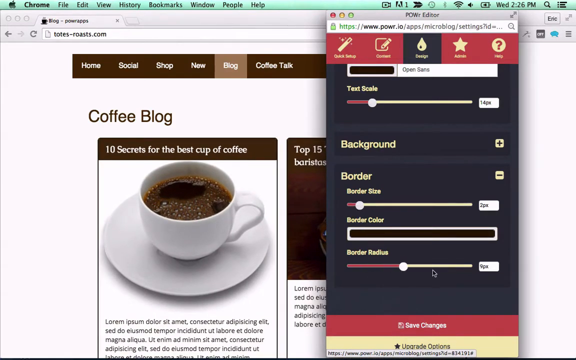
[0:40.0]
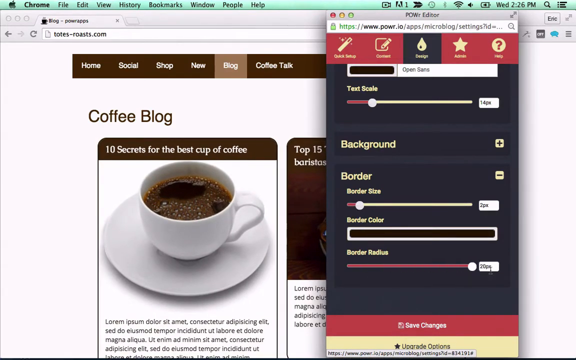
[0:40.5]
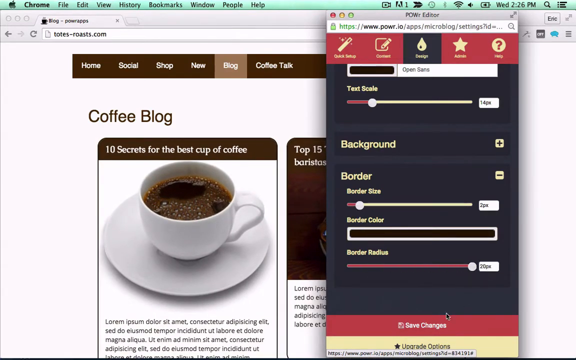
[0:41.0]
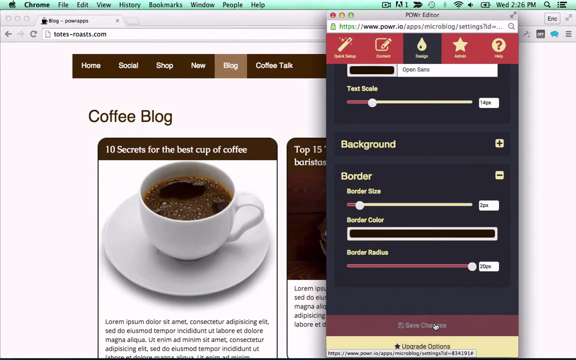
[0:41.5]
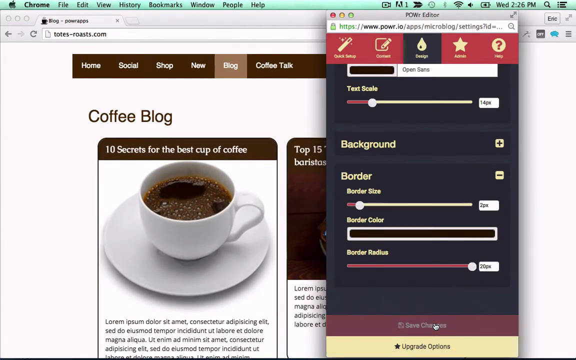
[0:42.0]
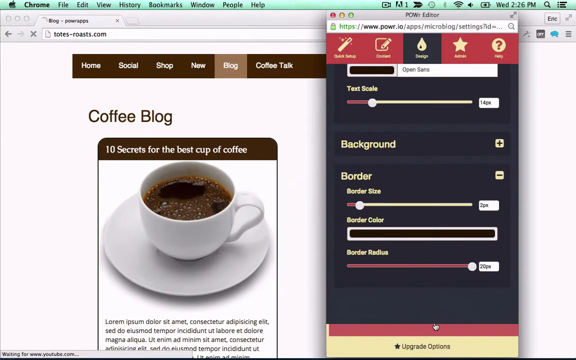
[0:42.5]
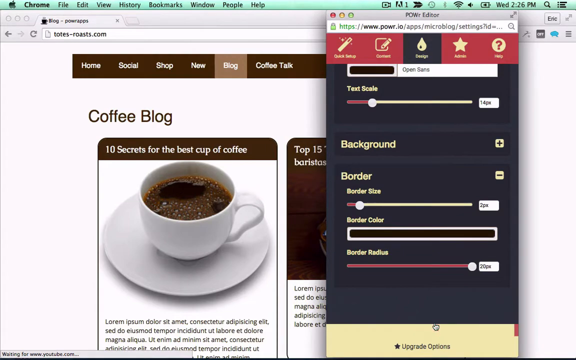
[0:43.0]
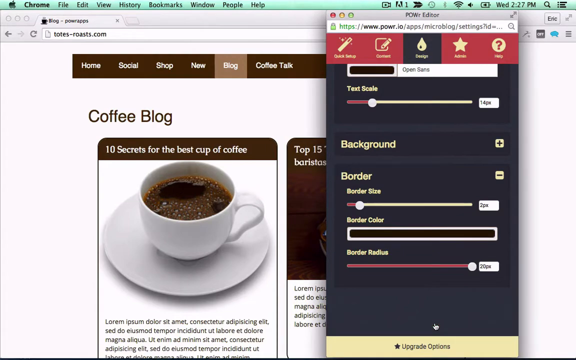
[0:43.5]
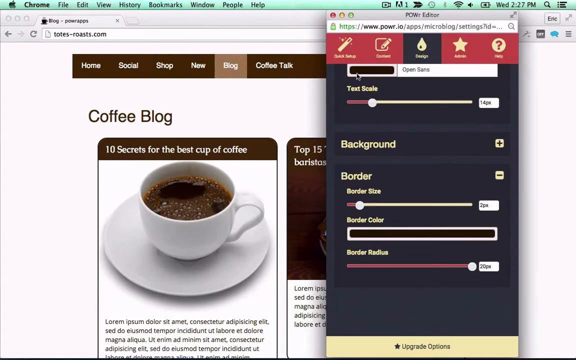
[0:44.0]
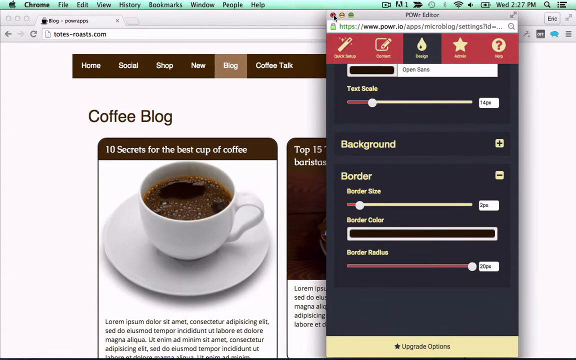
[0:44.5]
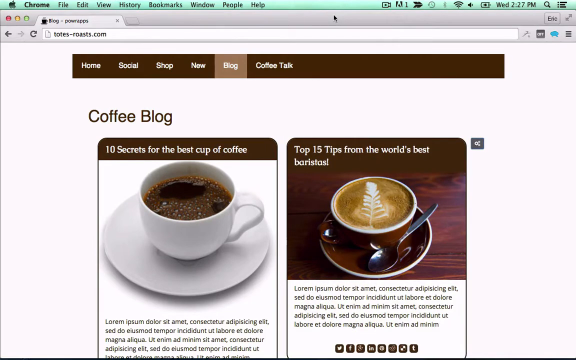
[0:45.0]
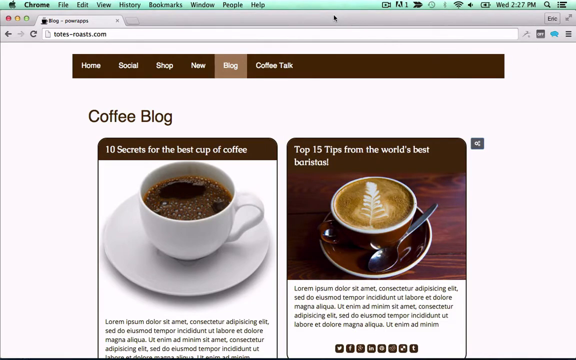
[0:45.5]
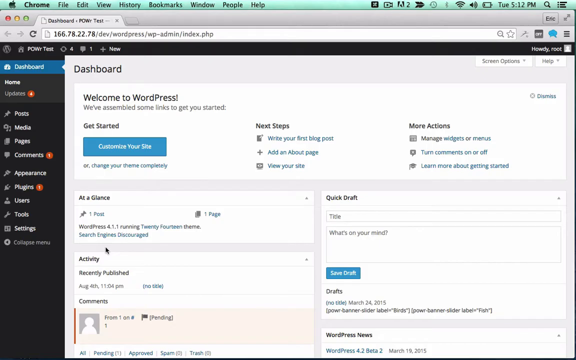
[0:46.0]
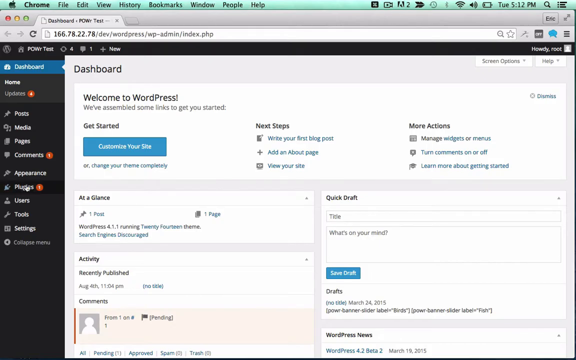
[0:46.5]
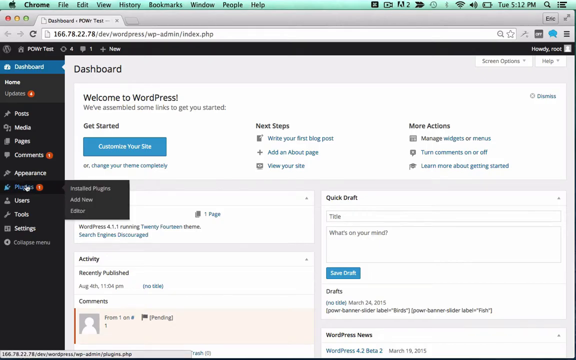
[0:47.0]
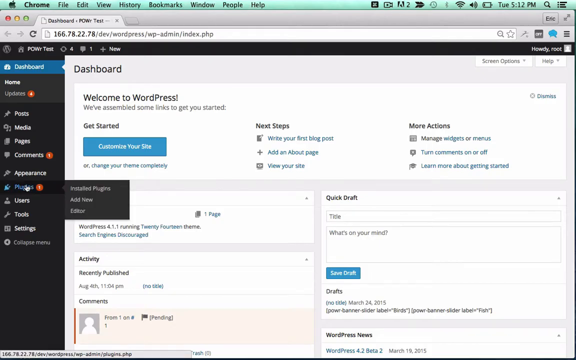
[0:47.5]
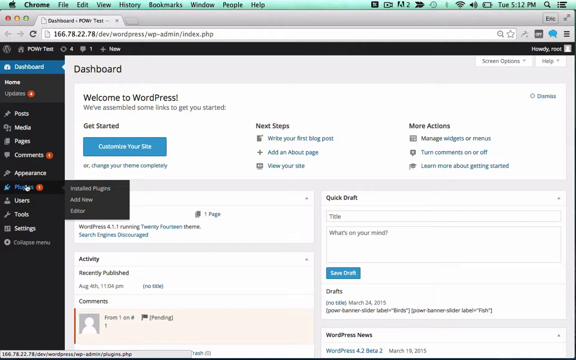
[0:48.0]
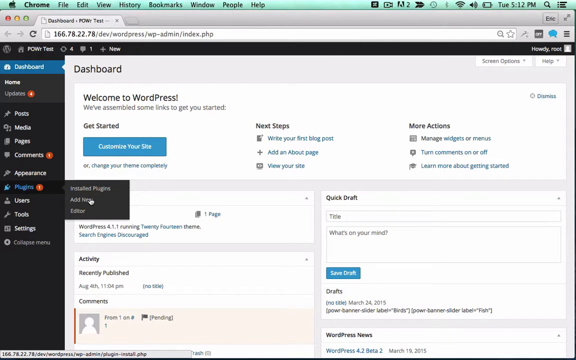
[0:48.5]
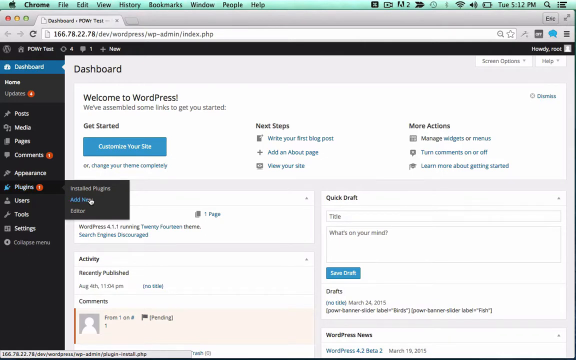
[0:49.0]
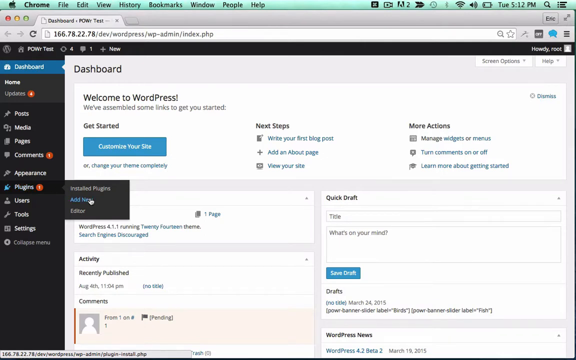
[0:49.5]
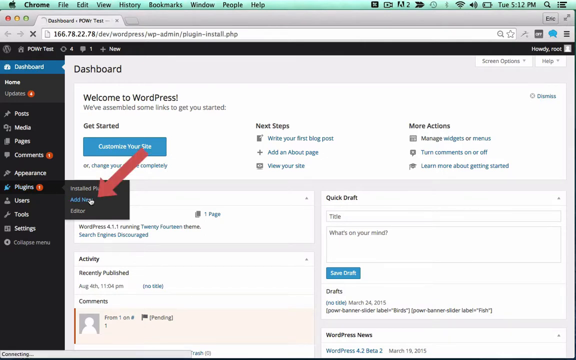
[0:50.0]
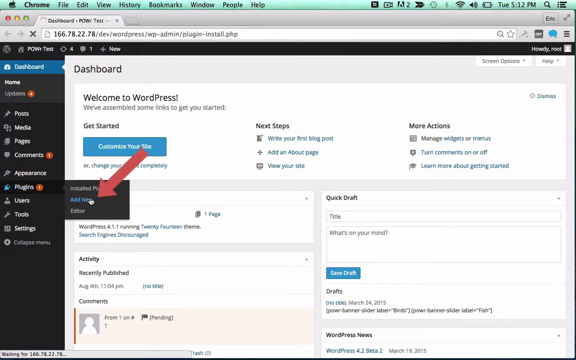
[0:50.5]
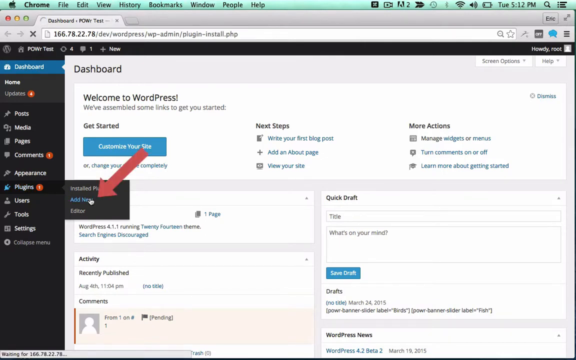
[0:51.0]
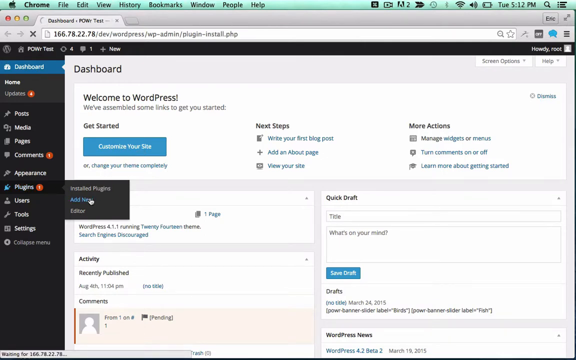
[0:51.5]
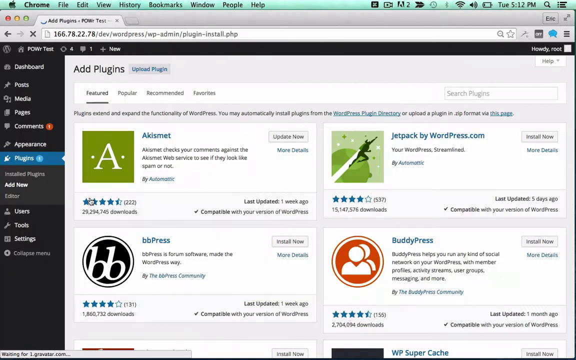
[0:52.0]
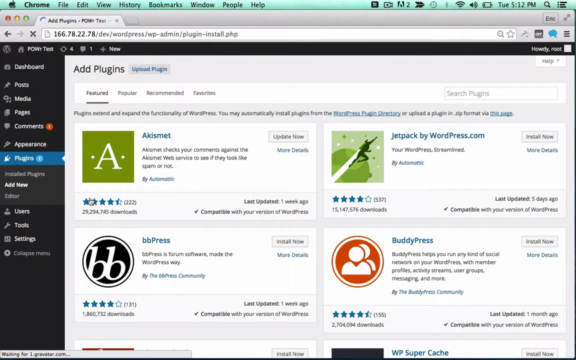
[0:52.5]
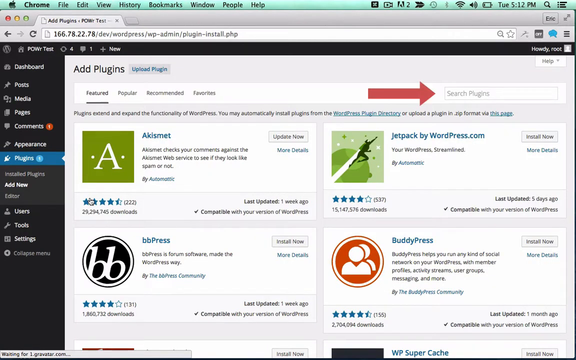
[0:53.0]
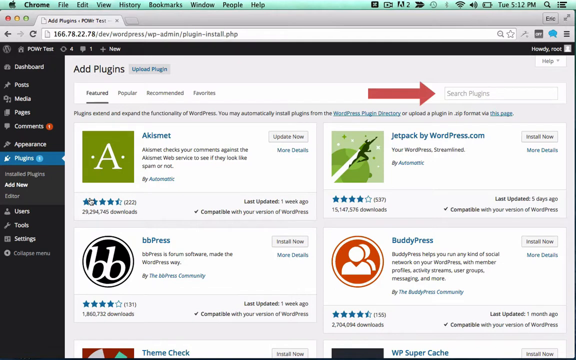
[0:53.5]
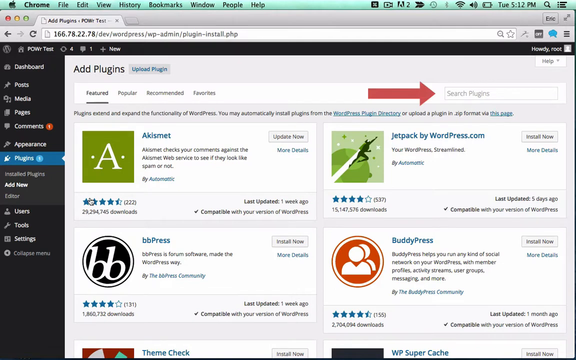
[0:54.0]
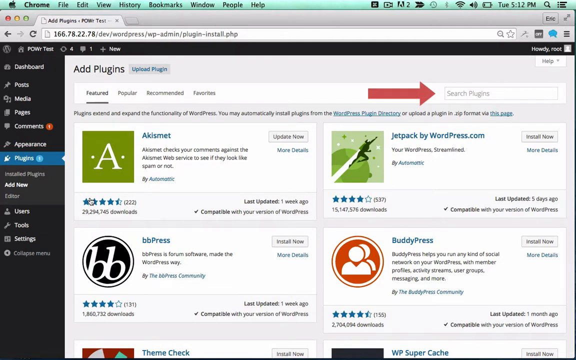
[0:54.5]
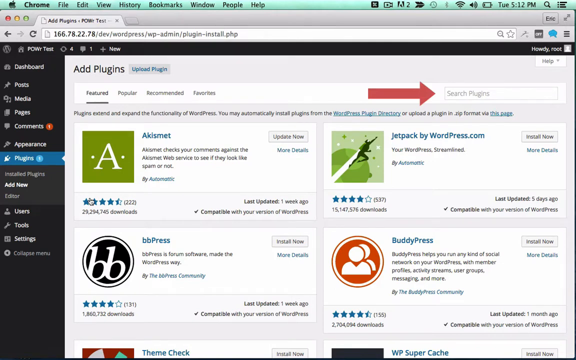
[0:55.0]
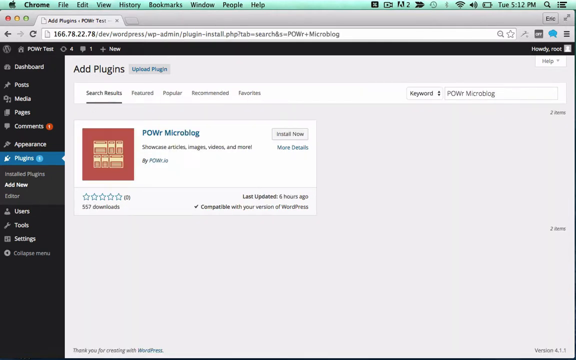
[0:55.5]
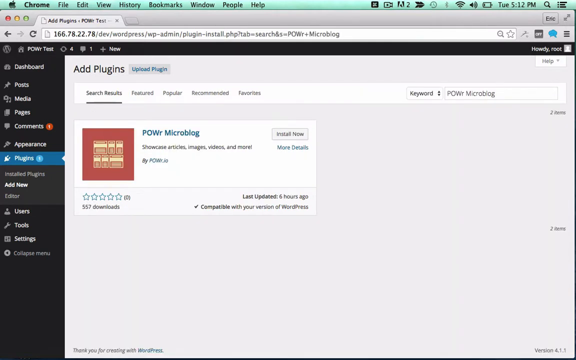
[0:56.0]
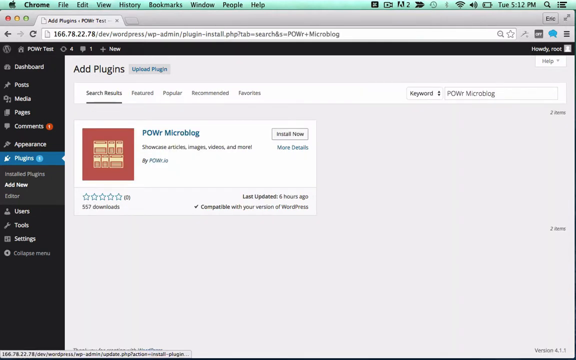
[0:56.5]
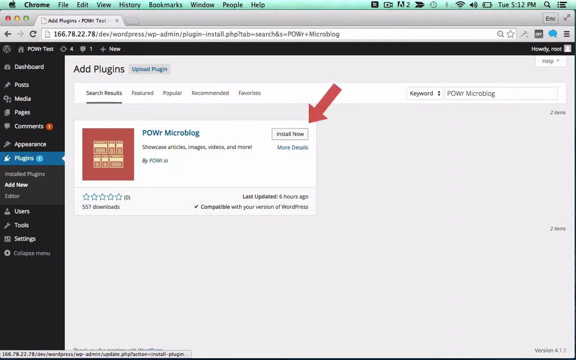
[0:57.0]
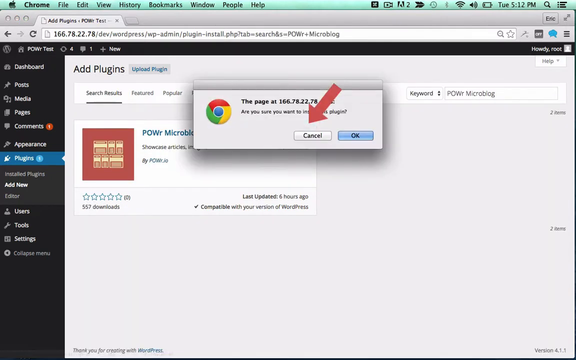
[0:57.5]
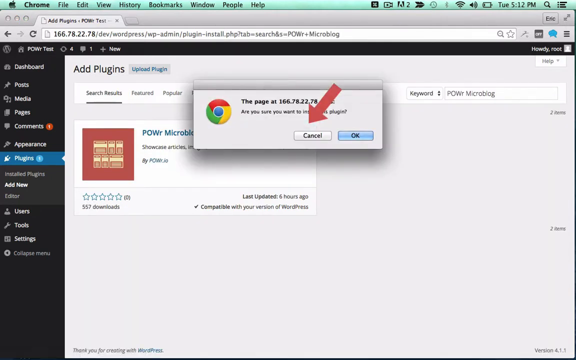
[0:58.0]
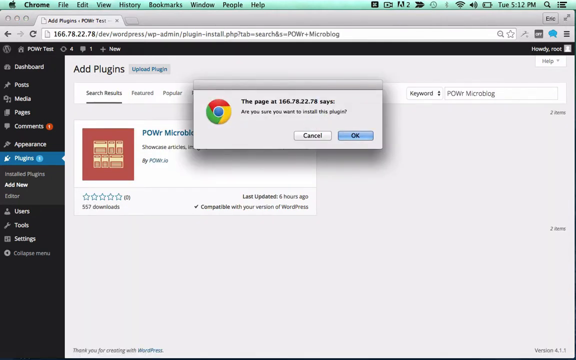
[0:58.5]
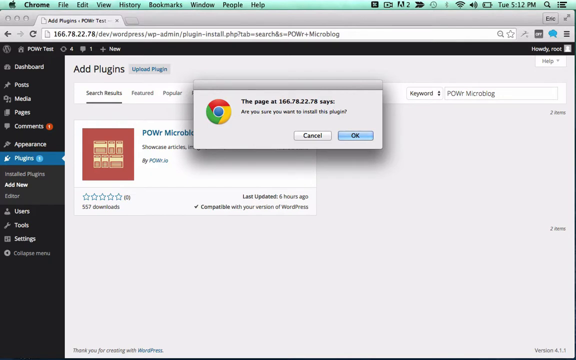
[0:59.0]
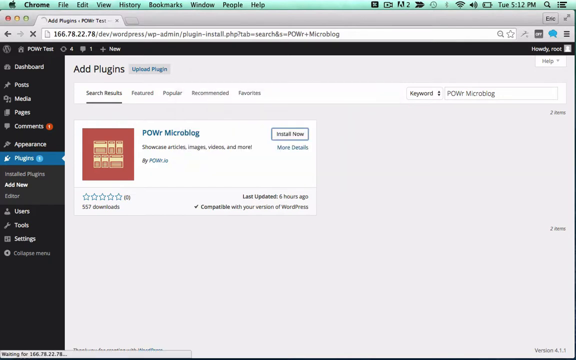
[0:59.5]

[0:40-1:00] The person clicks off the editing tab and opens WordPress, which says at the top "welcome to WordPress, we've assembled some links to get you started". A dashboard on the left-hand side has links such as posts, media, pages, comments, appearance, photos and plugins. The person clicks plugins, and a red arrow appears next to the drop-down that comes up, pointing to add new, which the person clicks. The add plugins page appears, with a variety of plugins below such as Jetpack by WordPress, BuddyPress and BBPress. A new arrow points to the search bar at the top right, which says "search plugins", and they type in the power micro blog, which brings up that plugin below. An arrow points to install now, which is clicked, and a smaller box opens from Google Chrome.